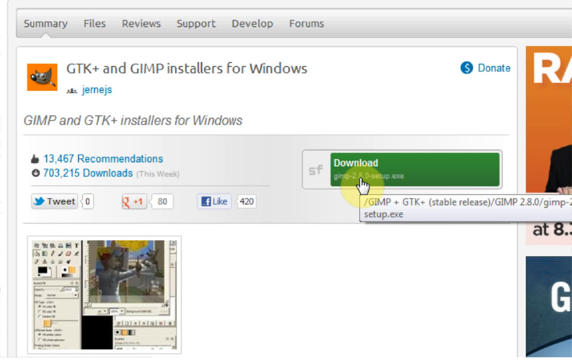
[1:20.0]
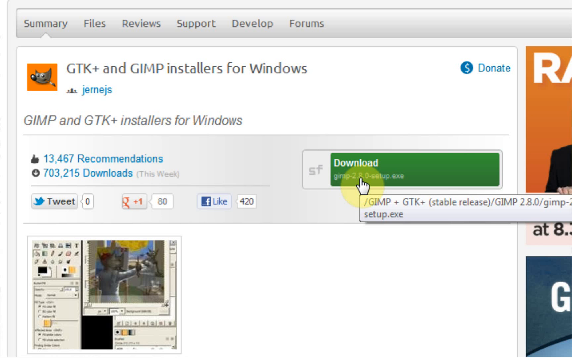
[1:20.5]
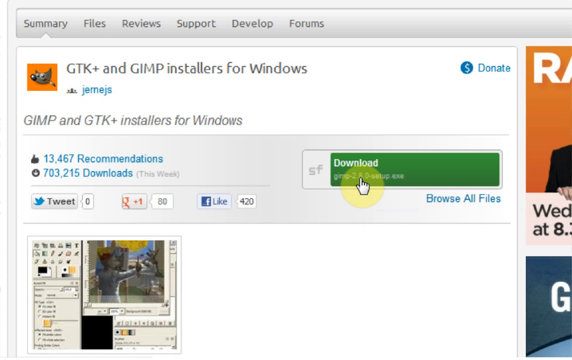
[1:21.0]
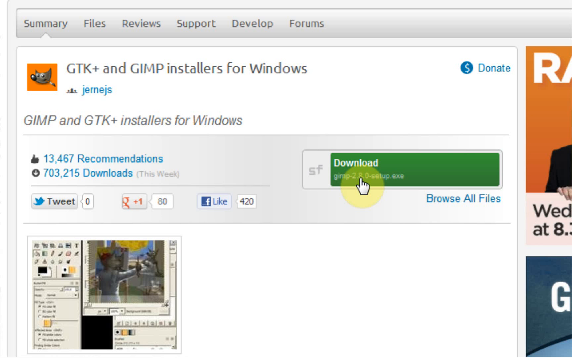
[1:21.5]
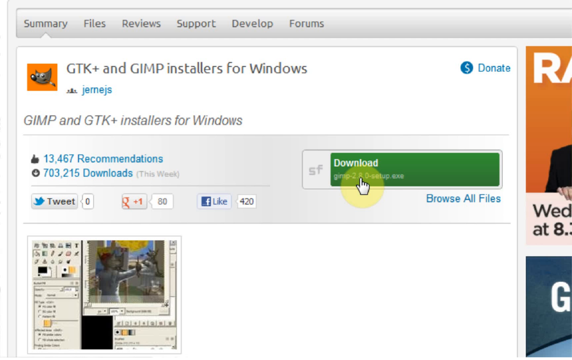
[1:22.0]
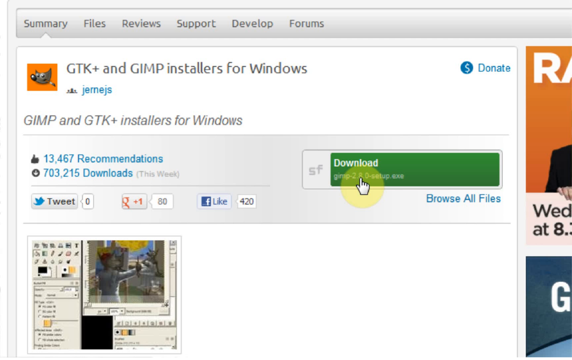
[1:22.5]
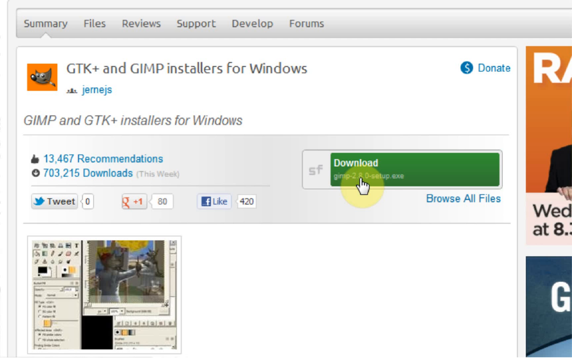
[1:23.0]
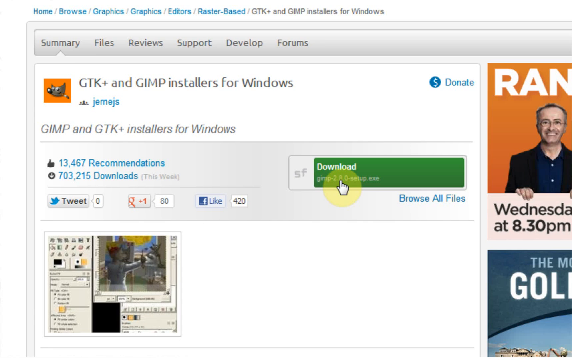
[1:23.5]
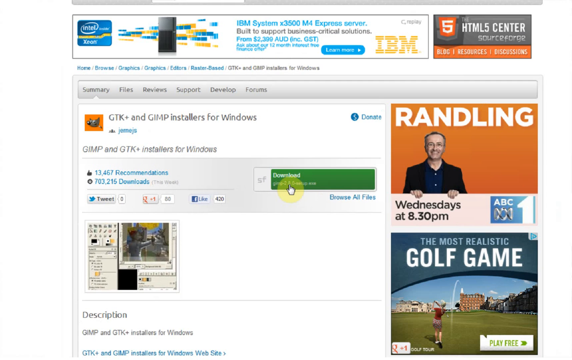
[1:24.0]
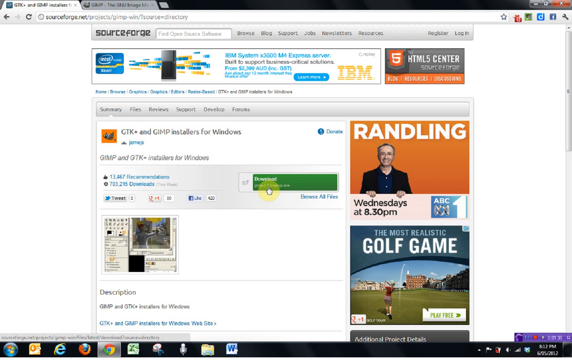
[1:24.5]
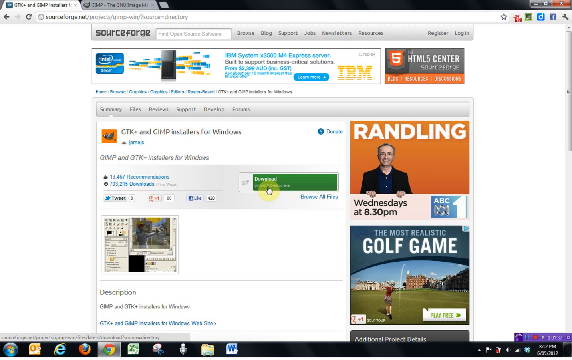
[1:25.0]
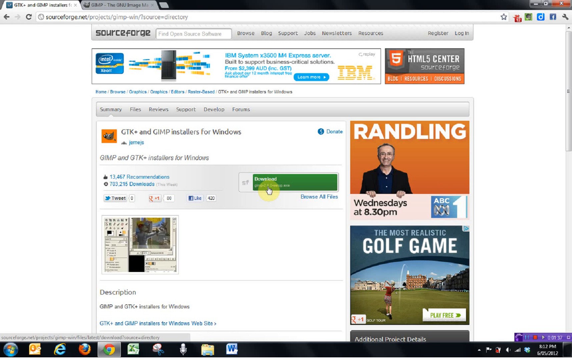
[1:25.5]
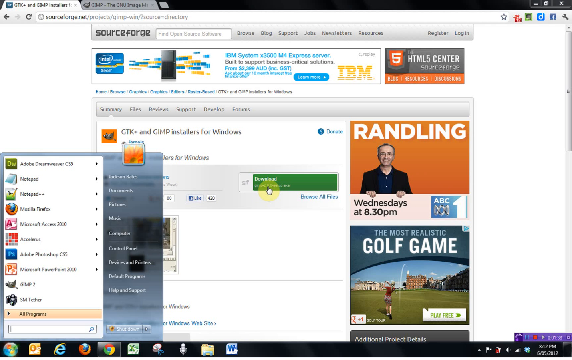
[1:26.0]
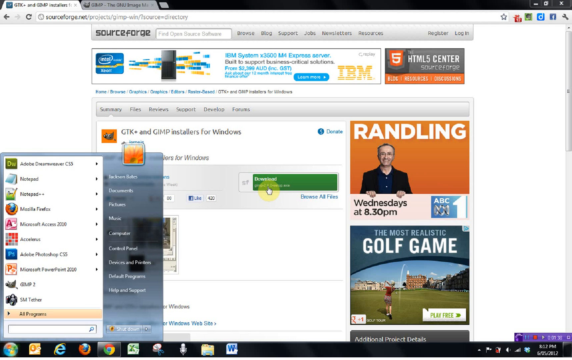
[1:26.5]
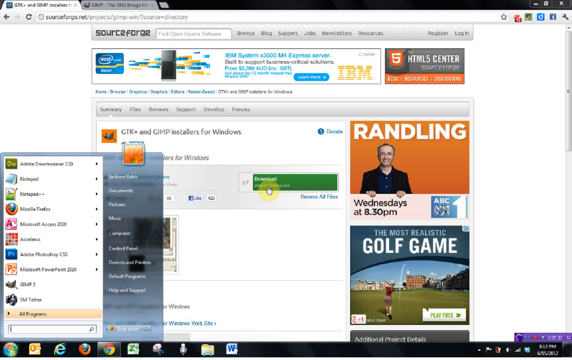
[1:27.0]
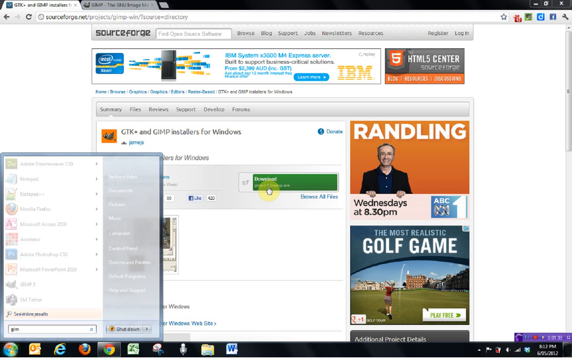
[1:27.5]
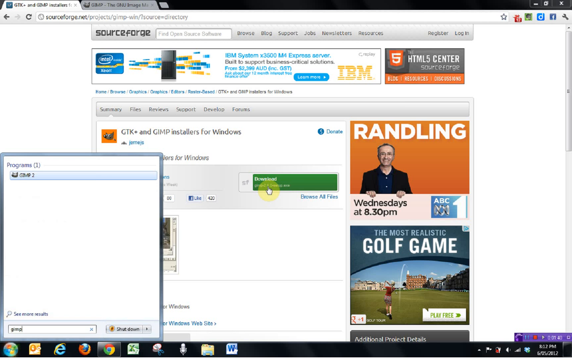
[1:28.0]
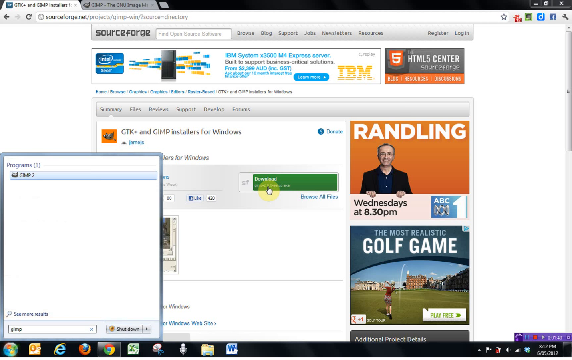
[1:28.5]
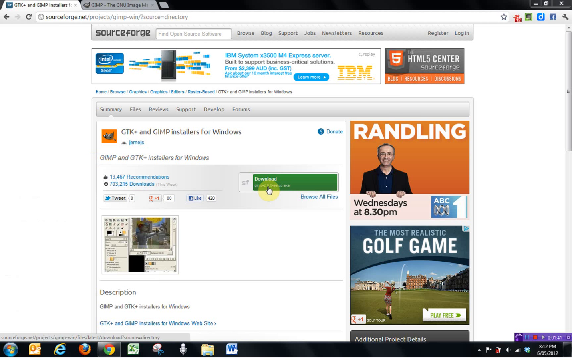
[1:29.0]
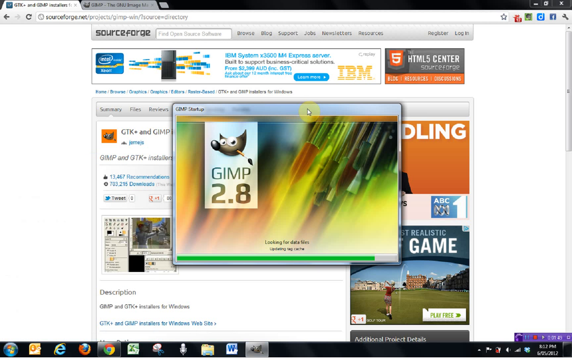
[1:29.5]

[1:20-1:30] It appears the download button was clicked at some point, because the cursor goes to the Windows start menu and types "GIMP" in the search bar. GIMP 2.8 pops up in the search results while the view zooms out. An icon then pops up that is similar to the smaller orange one but more graphically designed and with different colours; it shows a small animal of uncertain kind.